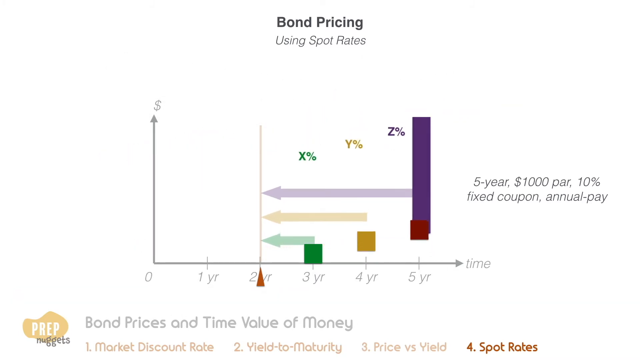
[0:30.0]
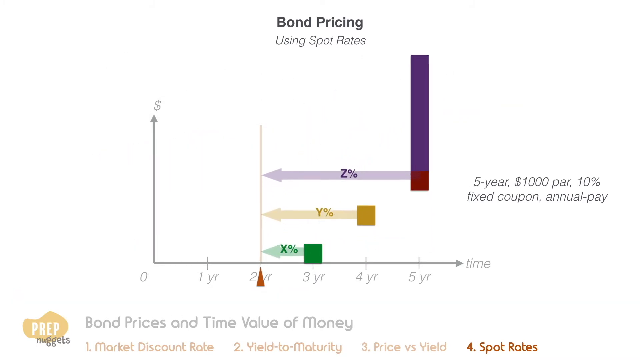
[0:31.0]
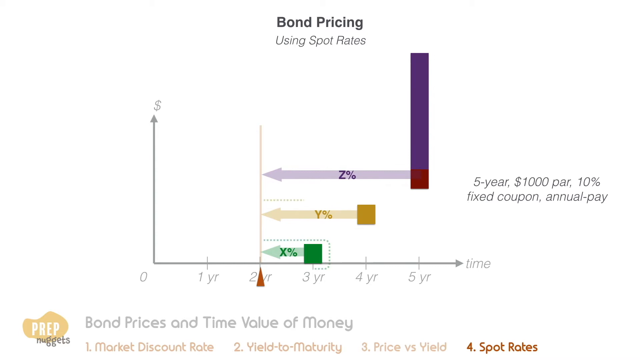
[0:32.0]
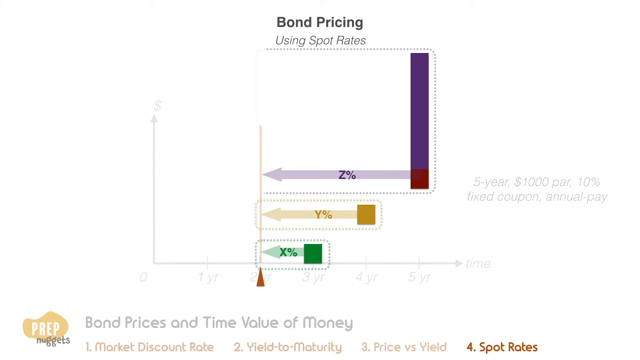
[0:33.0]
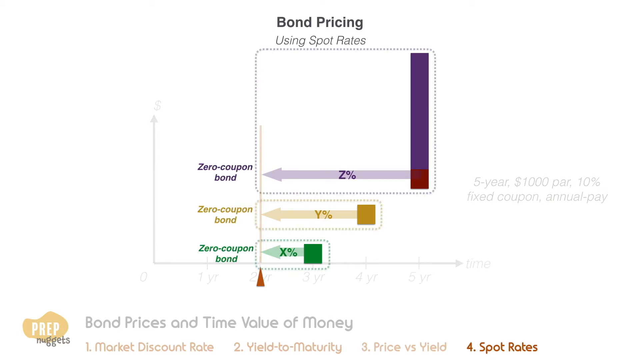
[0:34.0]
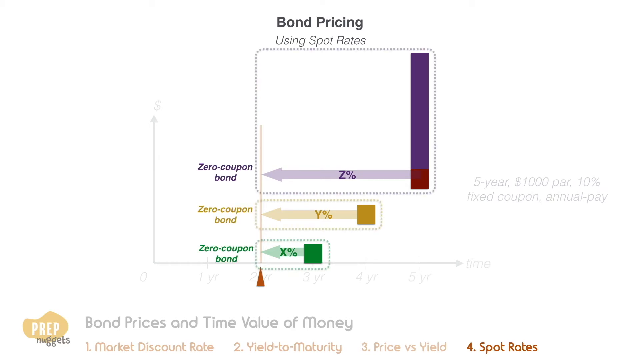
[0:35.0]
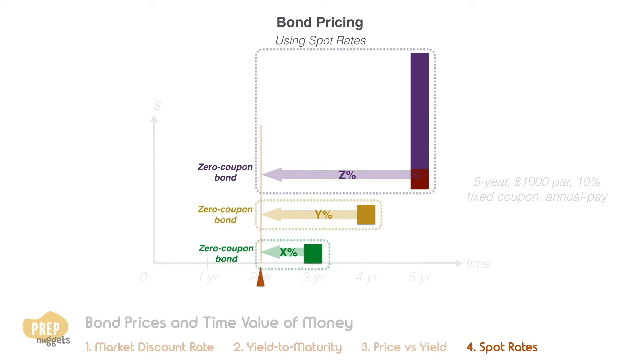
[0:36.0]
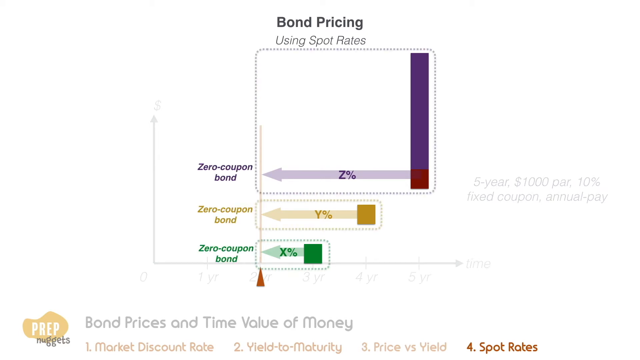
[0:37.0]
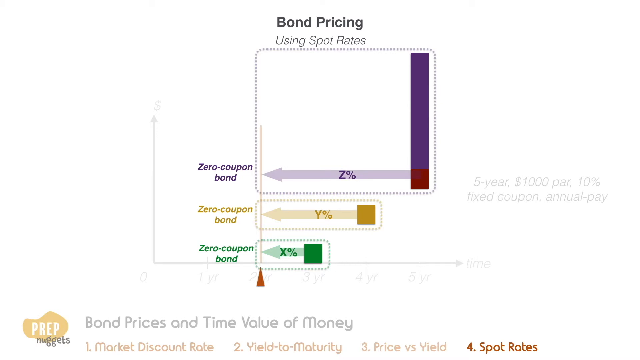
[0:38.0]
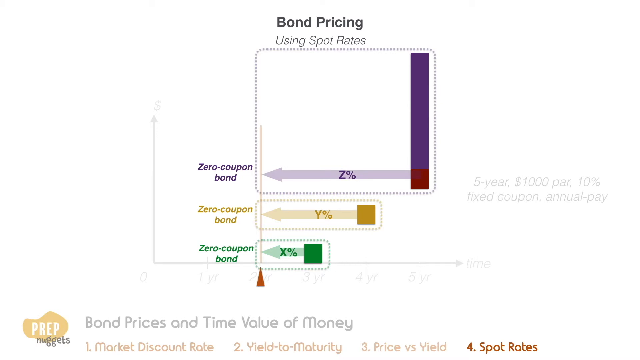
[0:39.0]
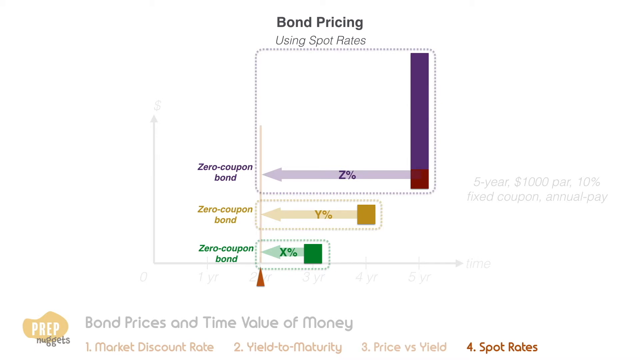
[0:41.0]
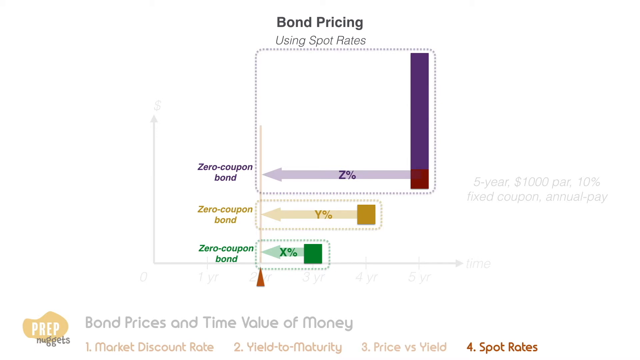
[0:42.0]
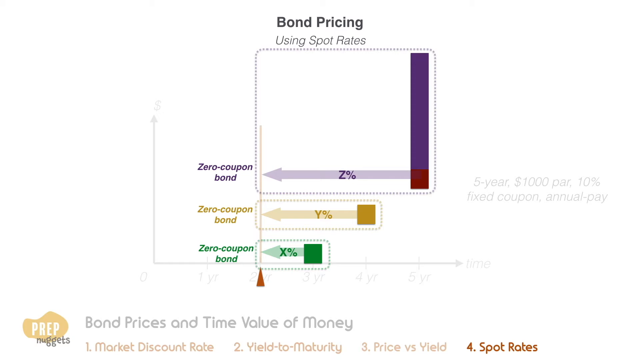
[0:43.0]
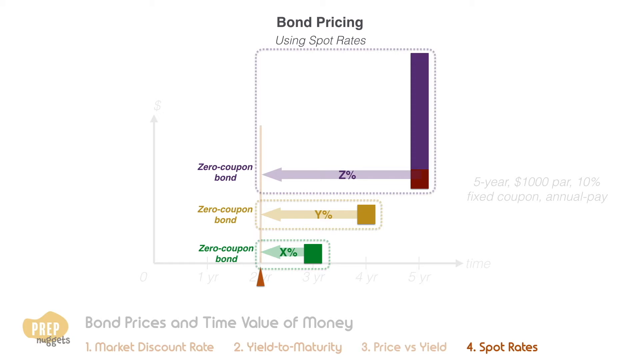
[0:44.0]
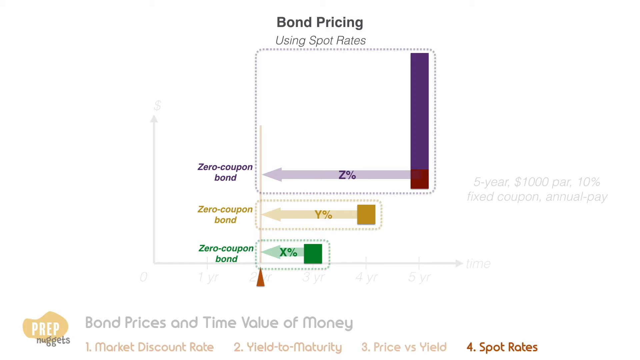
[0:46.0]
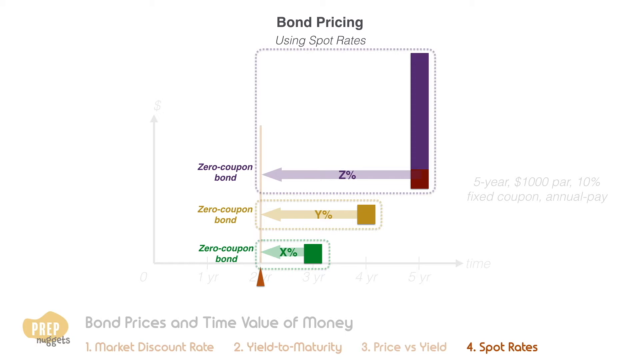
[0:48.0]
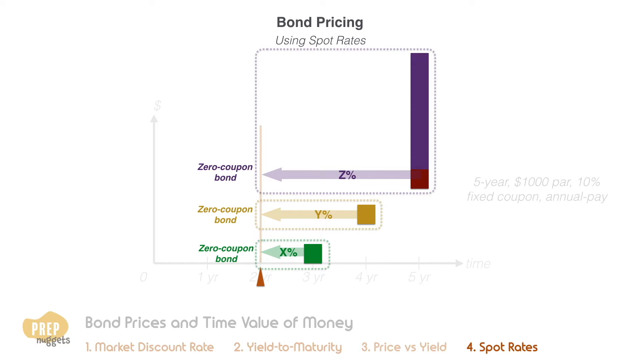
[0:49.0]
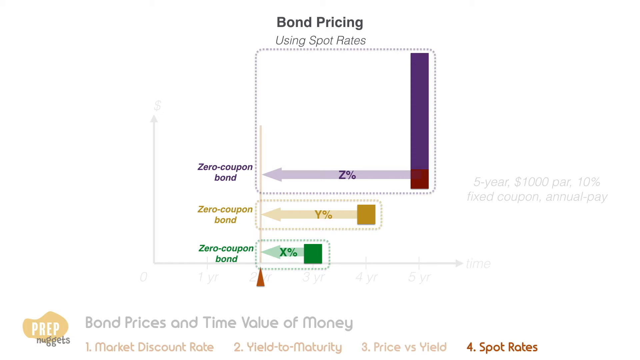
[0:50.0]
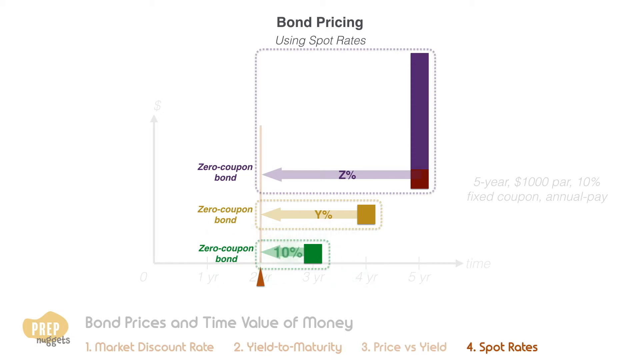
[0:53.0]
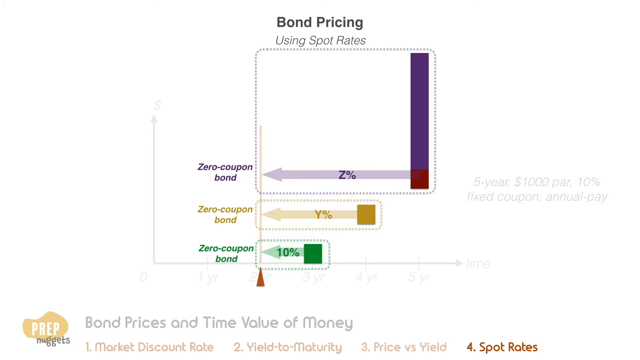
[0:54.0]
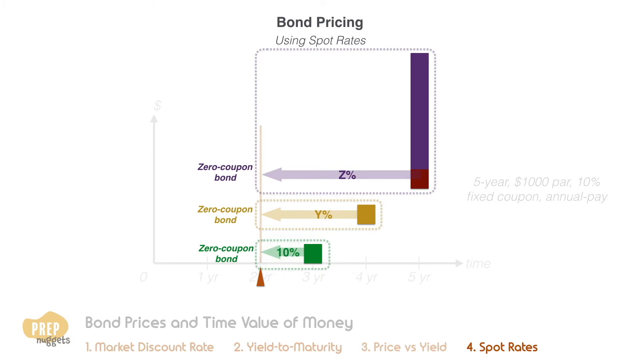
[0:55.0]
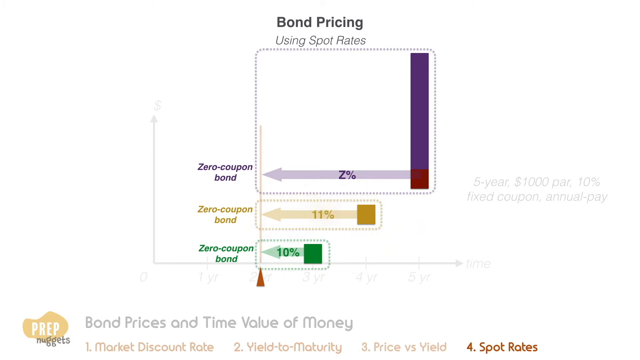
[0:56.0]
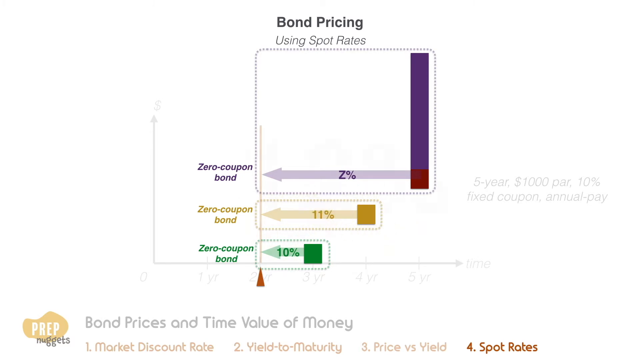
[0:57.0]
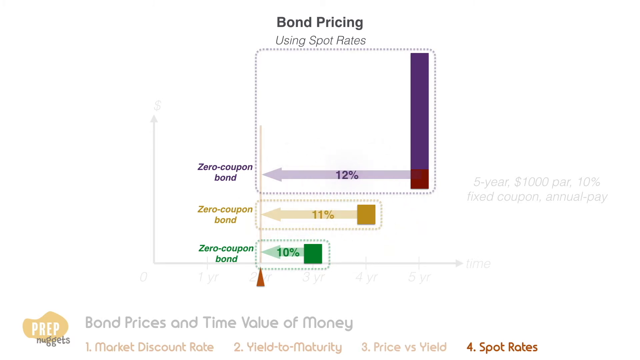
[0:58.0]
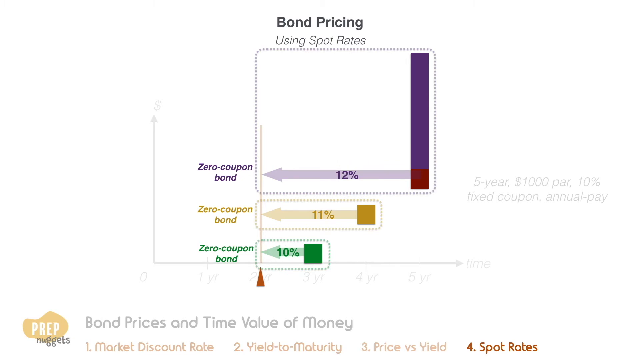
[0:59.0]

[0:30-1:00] The bar graph appears with X, Y and Z labeled; it is titled "bond pricing using spot rates". The green bar is renamed X, the yellow bar Y and the purple bar Z, each followed by a percent sign. On the side of the graph, text describes a five-year, thousand-dollar par, ten percent fixed coupon, annual pay bond. An arrow at the bottom indicates year two. The words "zero coupon bond" appear next to each of the X, Y and Z bars in their colors, and nothing else on the graph changes for the rest of the shot. The purple bar starts with a red block at the bottom, the Y is just a block, and the X is also just a green block at the bottom. The text "bond prices and time value of money" is listed.